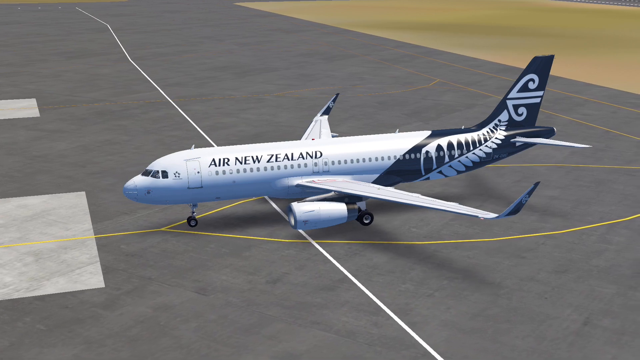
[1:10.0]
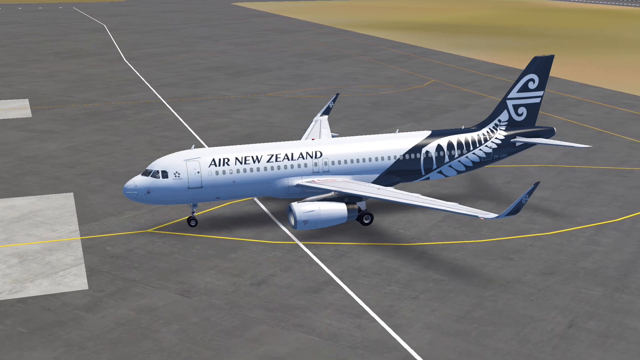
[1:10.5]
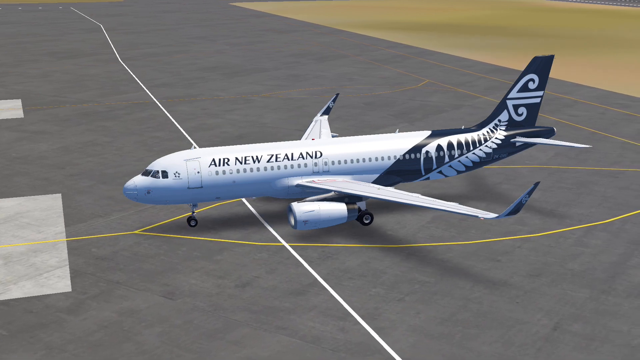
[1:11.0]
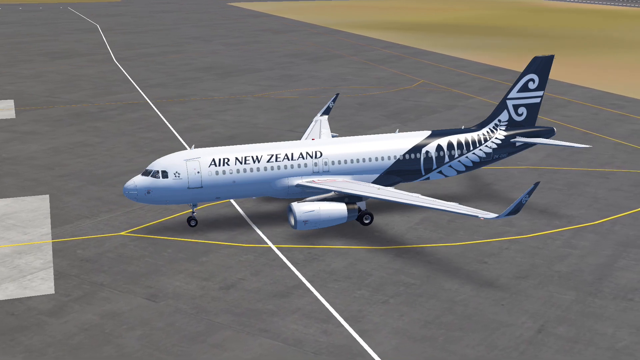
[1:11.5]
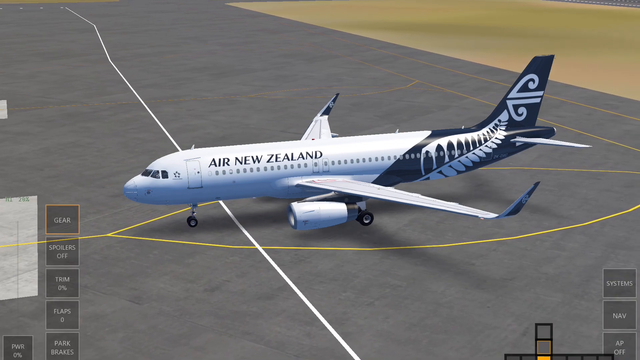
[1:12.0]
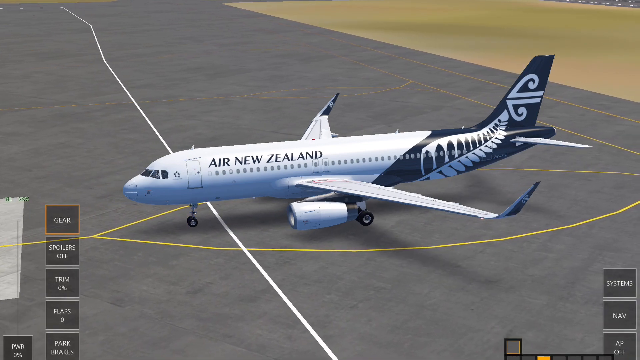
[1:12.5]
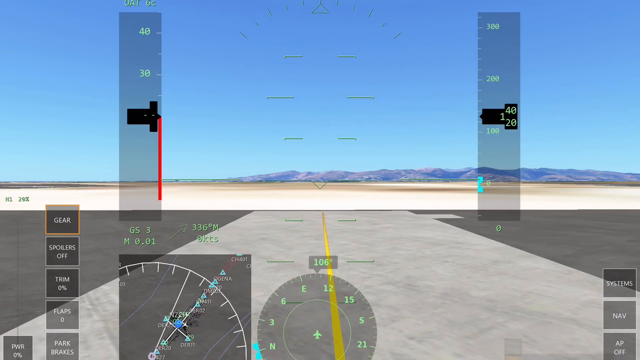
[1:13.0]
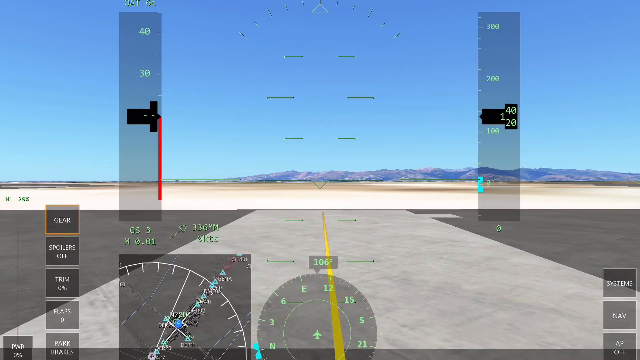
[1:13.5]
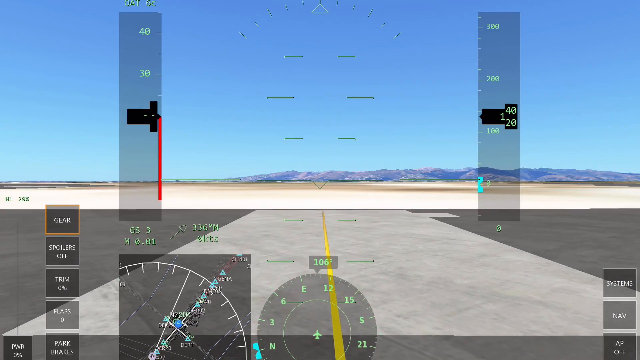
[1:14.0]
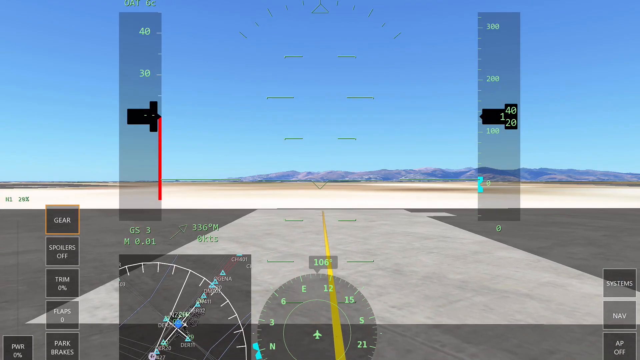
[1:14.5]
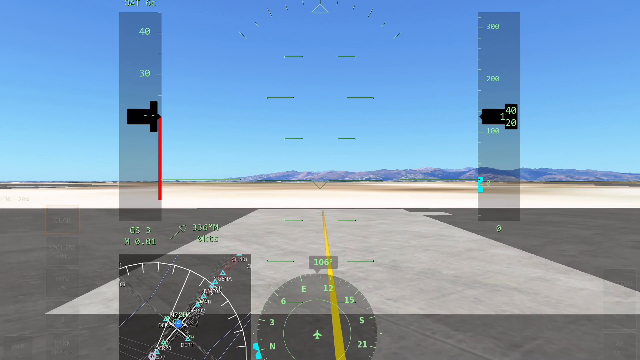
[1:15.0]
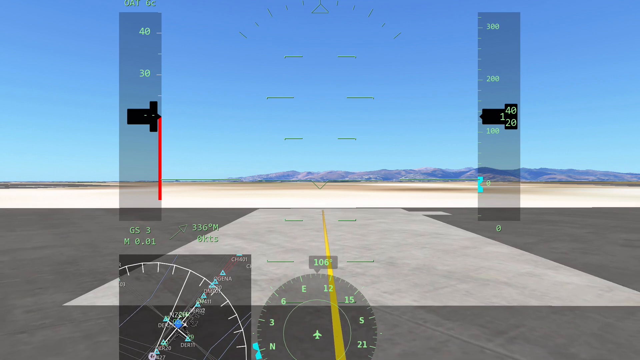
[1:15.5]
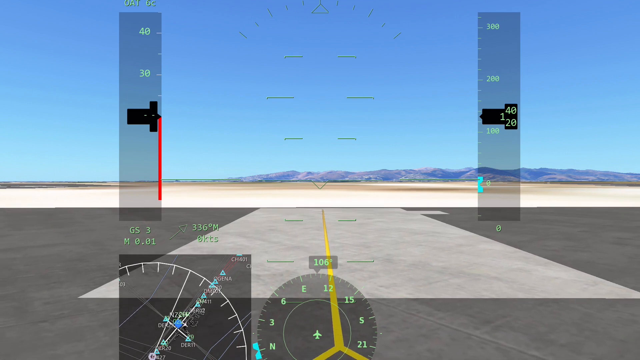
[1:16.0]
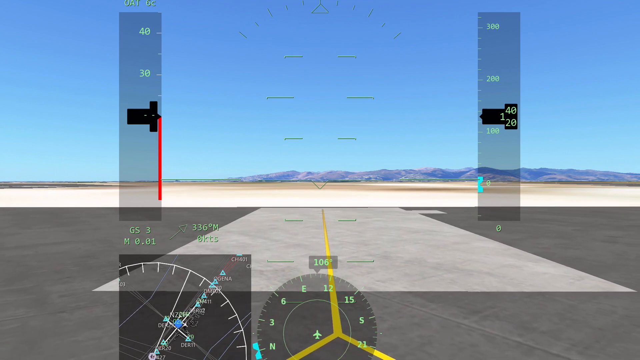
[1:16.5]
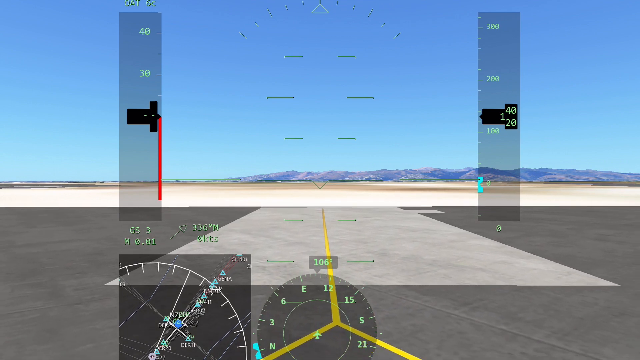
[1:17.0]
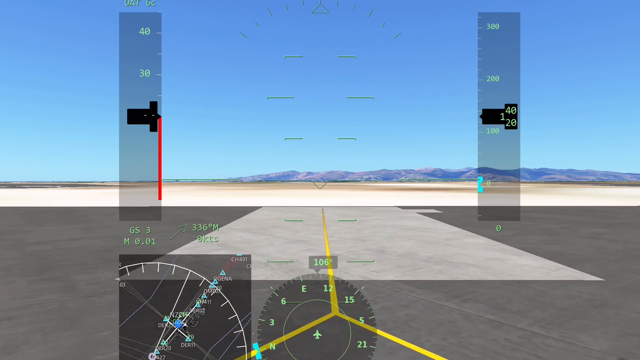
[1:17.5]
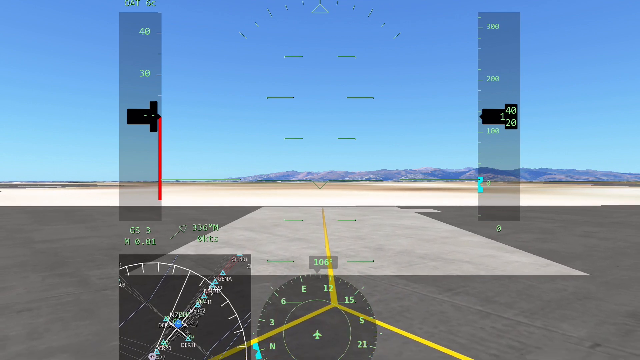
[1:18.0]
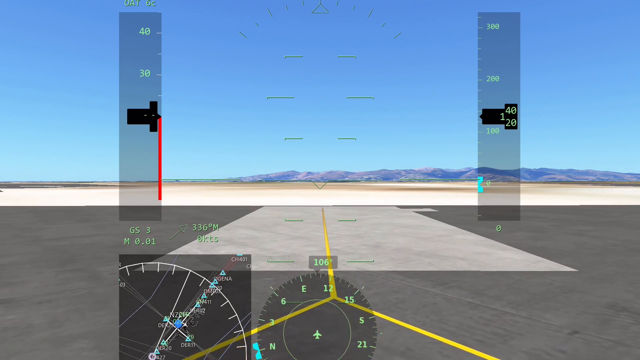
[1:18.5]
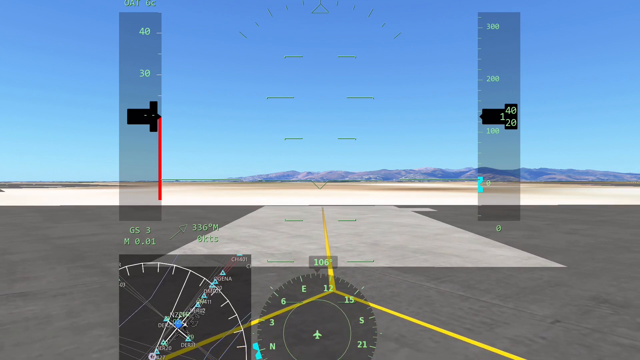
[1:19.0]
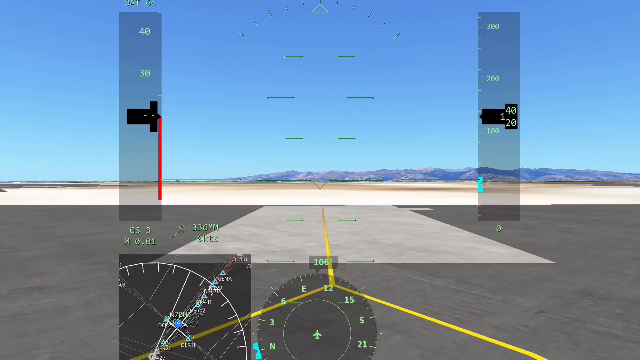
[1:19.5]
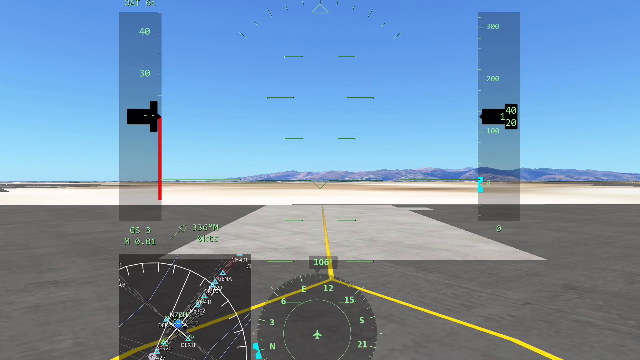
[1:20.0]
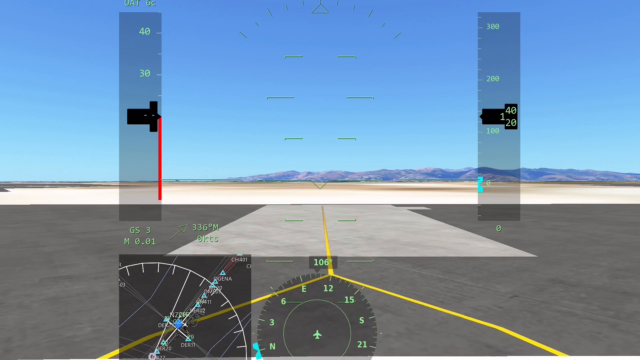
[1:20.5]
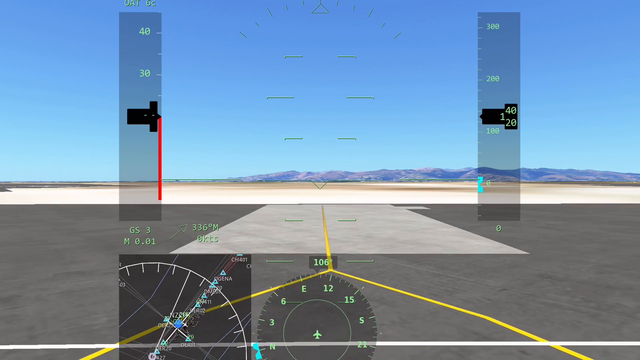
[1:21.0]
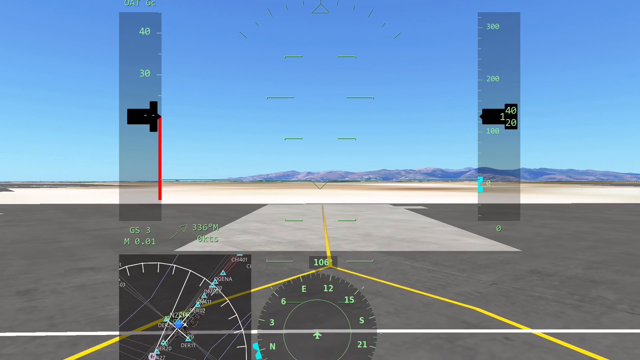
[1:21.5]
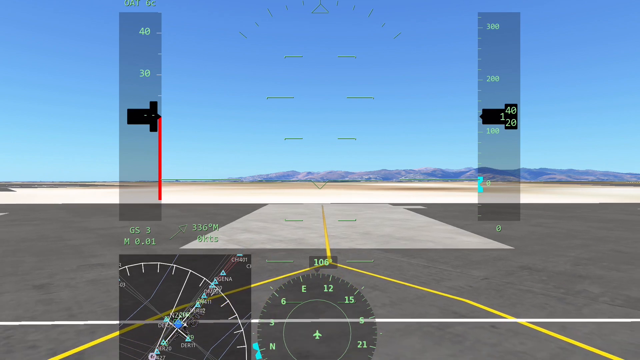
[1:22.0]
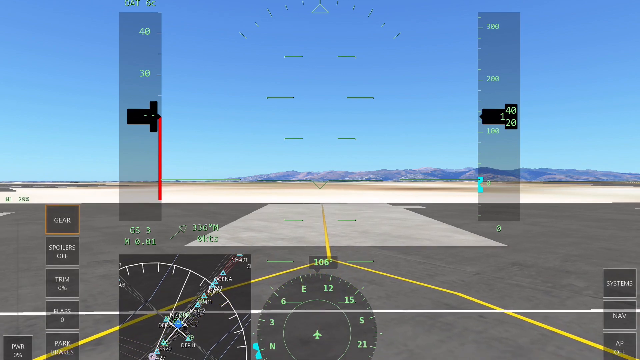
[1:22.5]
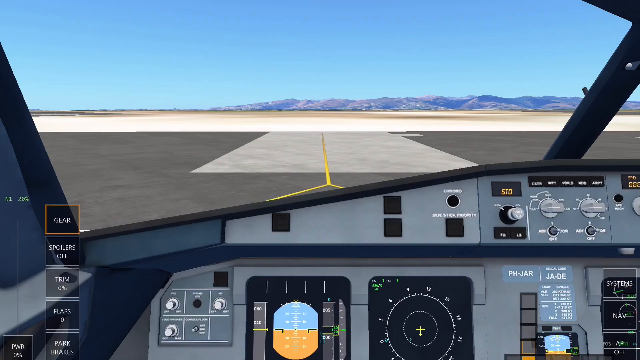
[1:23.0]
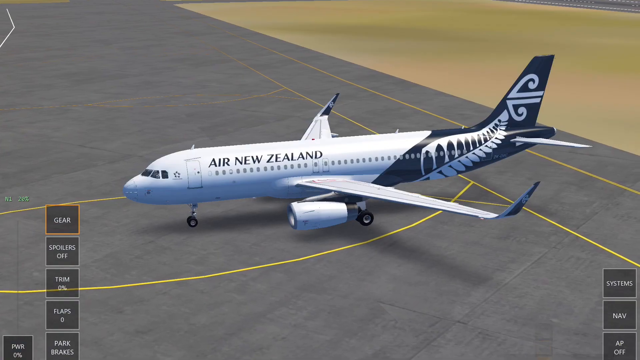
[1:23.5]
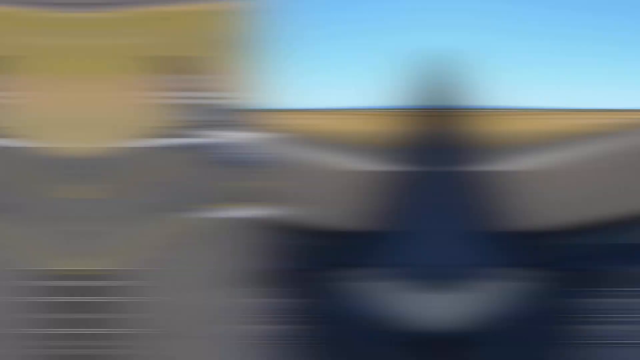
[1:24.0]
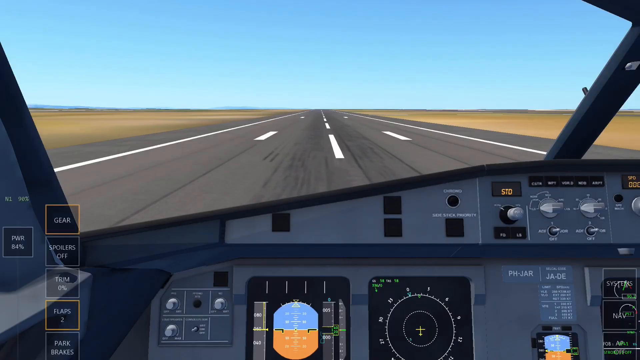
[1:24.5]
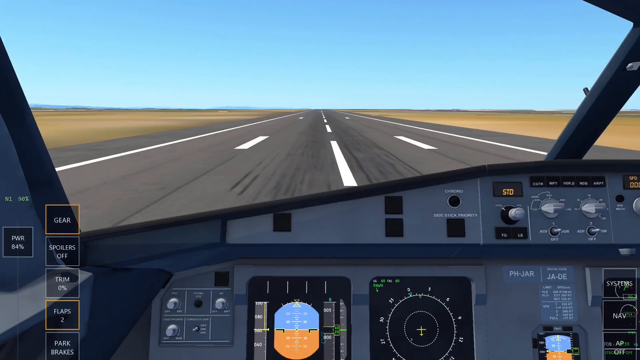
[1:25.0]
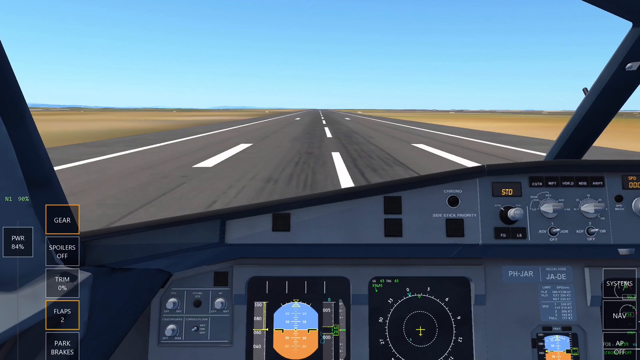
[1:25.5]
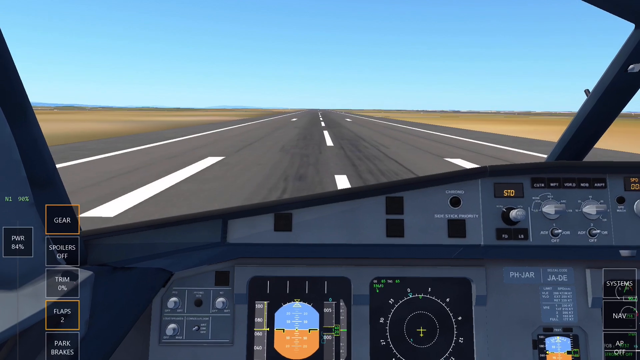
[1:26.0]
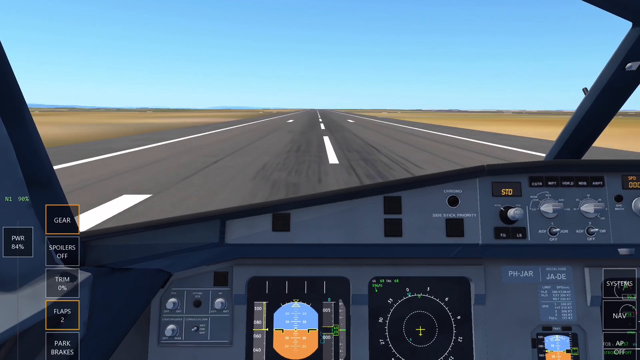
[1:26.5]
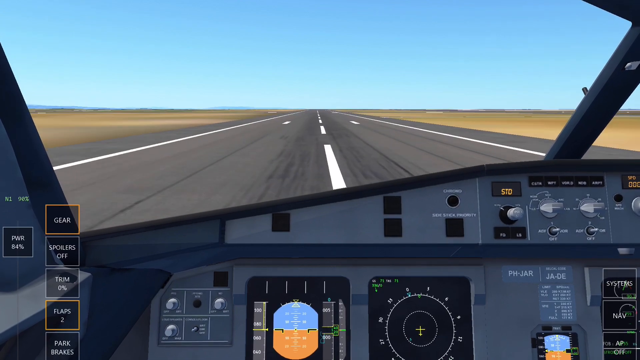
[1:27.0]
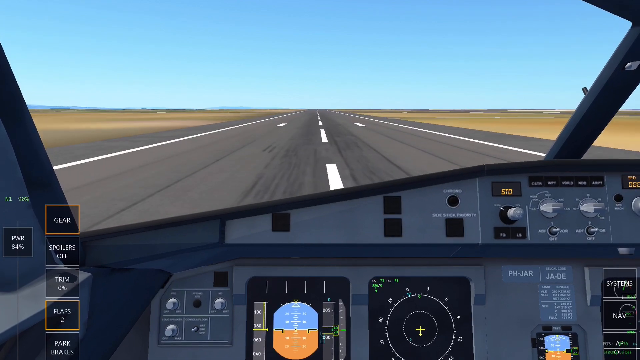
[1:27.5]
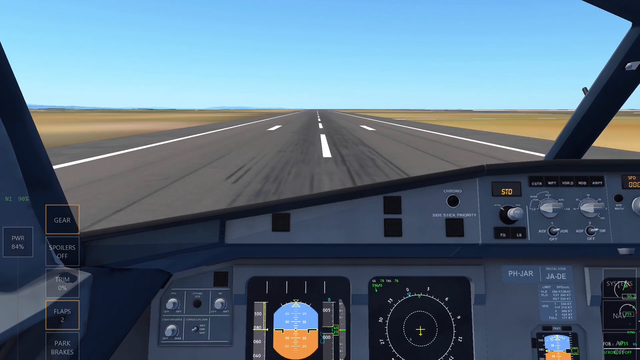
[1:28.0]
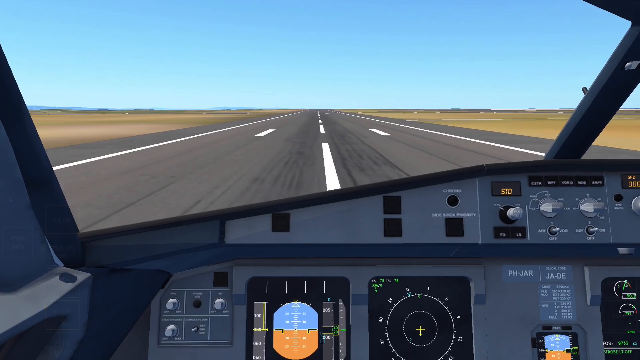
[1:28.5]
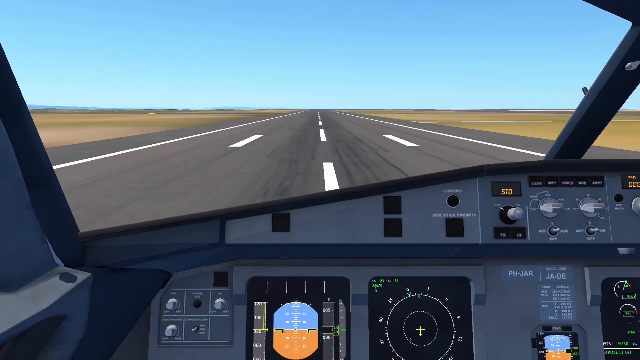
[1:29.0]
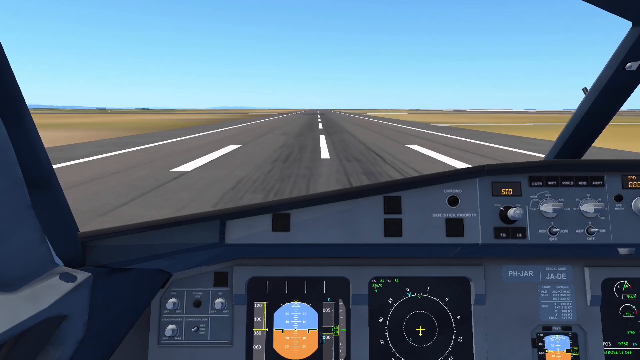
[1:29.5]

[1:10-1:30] An Air New Zealand aircraft sits on a runway in a simulation. The aircraft backs up slightly on the area it is sitting on, apparently from a jetway. Next the aircraft controls are shown: a screen with several controls on the left, the right and the bottom, with information in the center. Then the view is from inside the cockpit, looking out the window as the aircraft taxis down the runway, seemingly getting ready to take off.